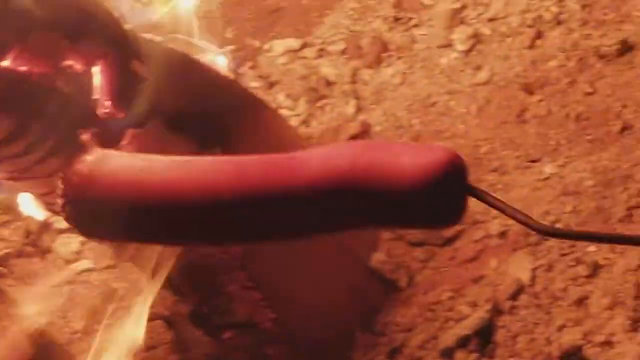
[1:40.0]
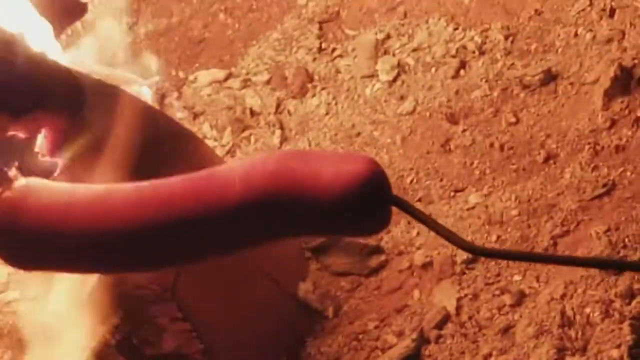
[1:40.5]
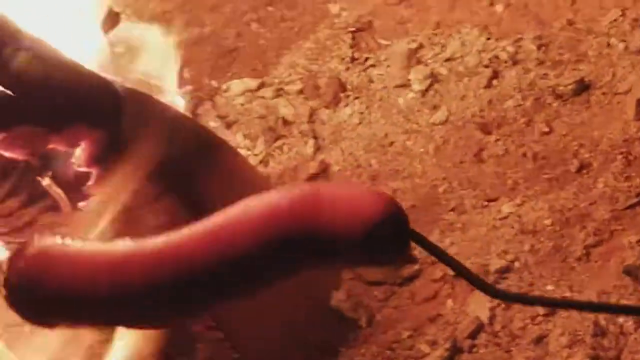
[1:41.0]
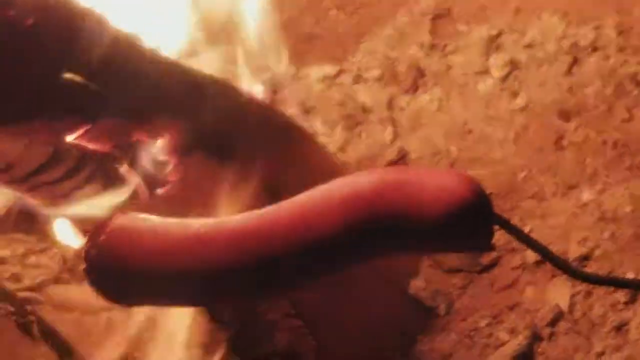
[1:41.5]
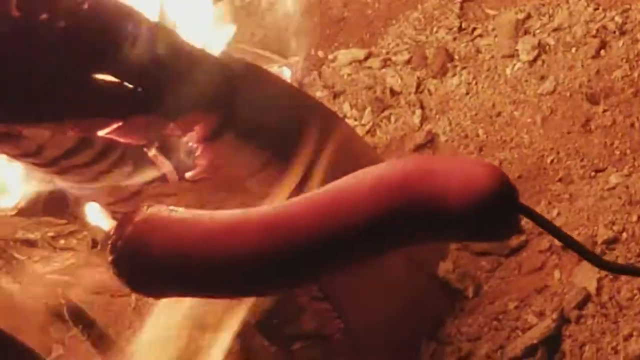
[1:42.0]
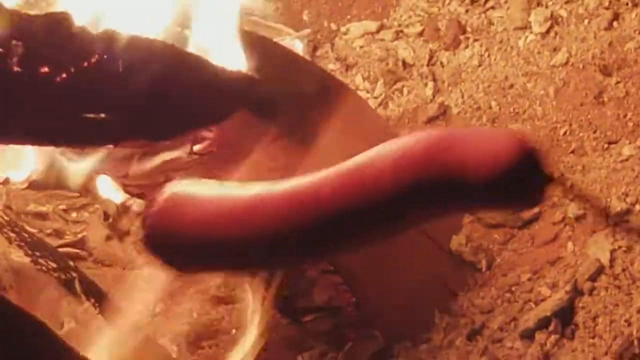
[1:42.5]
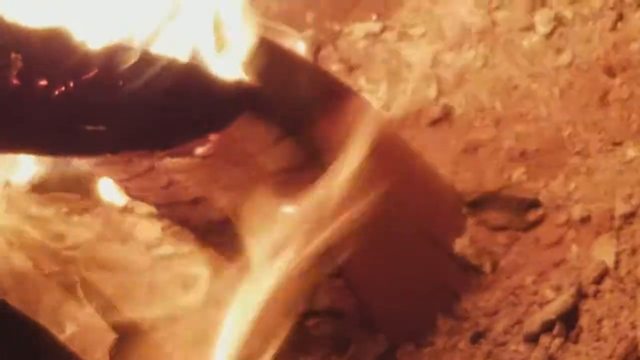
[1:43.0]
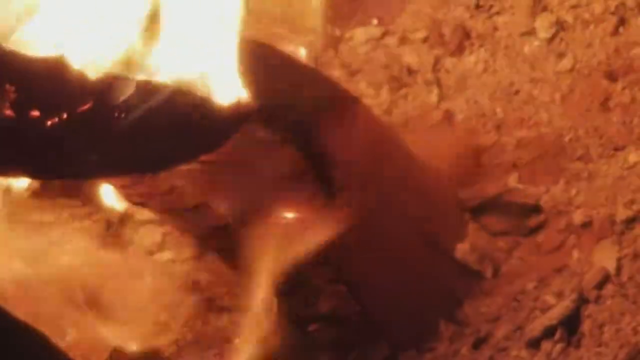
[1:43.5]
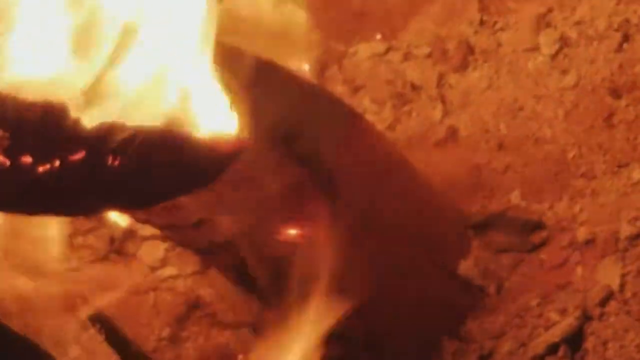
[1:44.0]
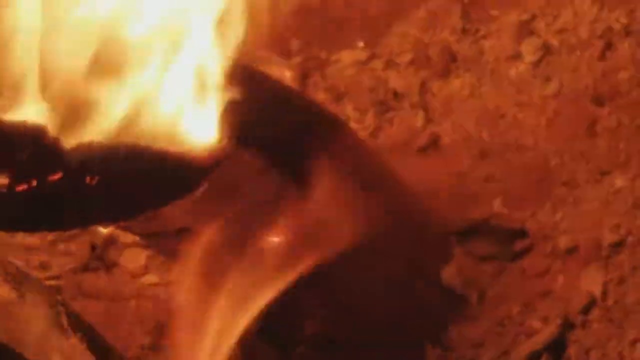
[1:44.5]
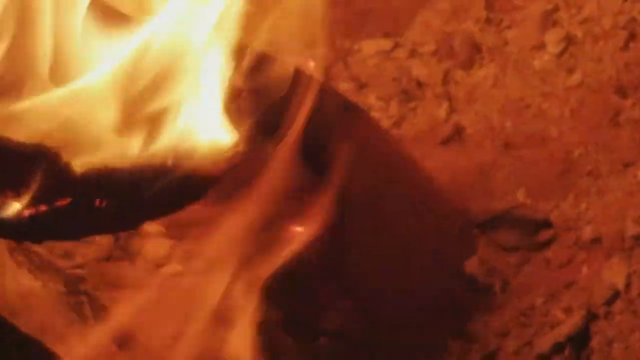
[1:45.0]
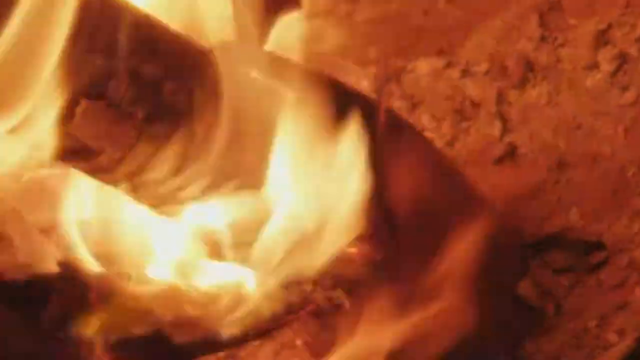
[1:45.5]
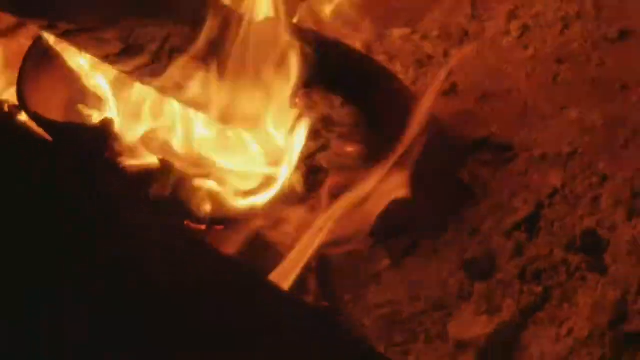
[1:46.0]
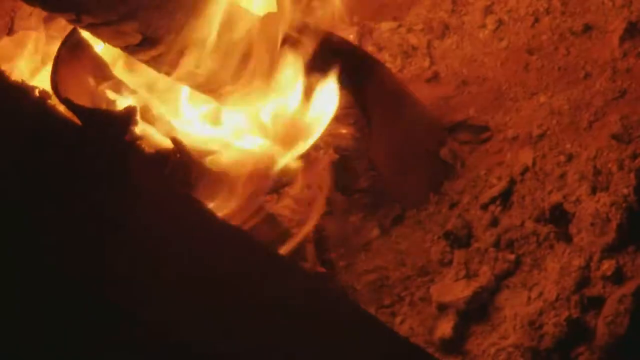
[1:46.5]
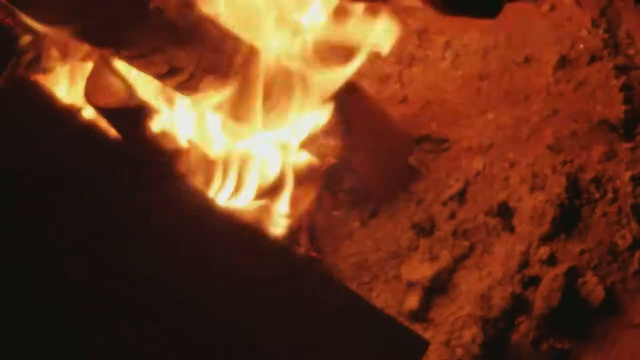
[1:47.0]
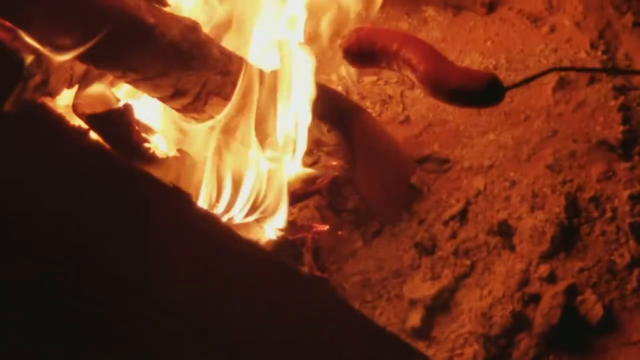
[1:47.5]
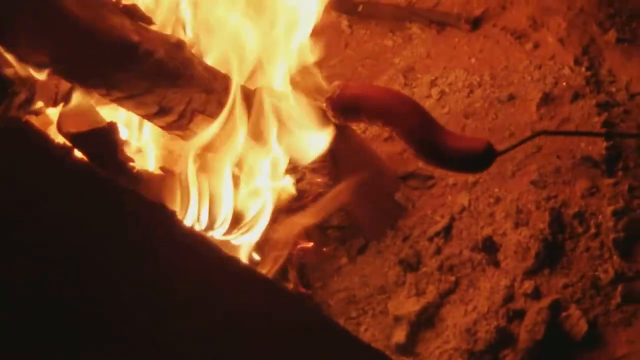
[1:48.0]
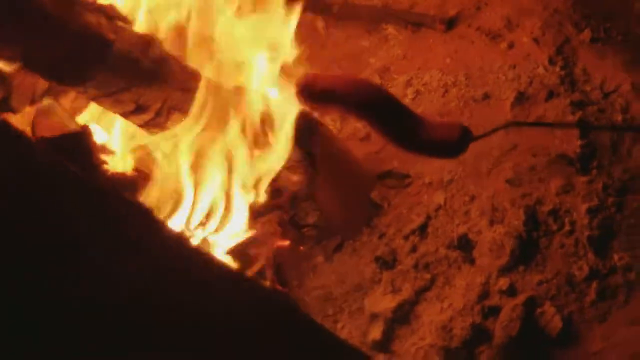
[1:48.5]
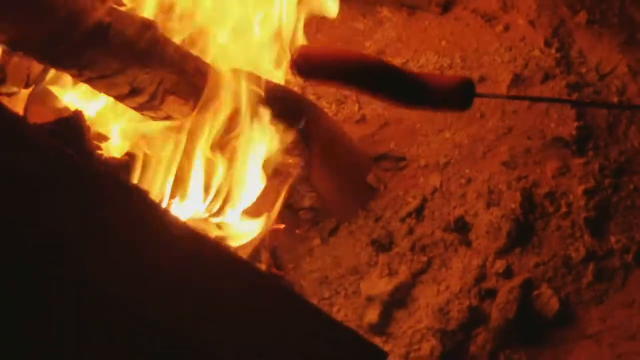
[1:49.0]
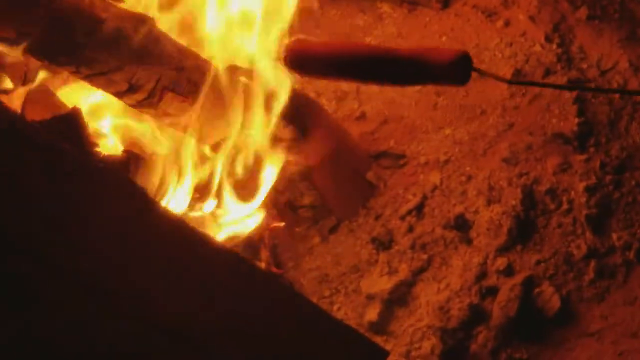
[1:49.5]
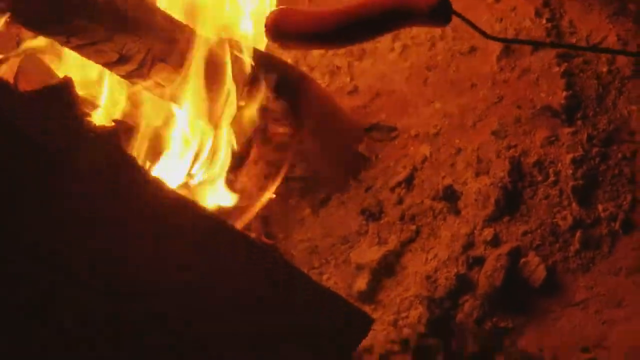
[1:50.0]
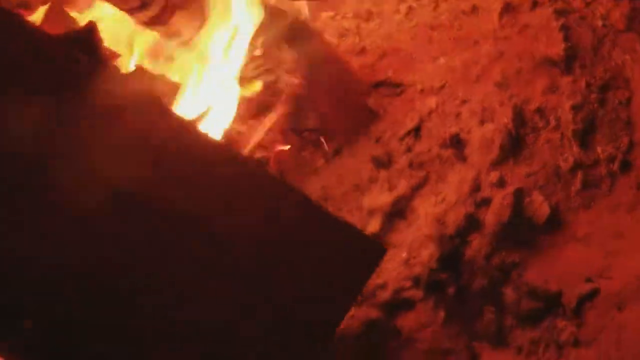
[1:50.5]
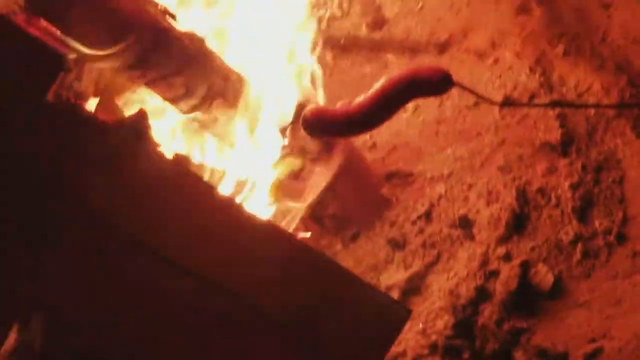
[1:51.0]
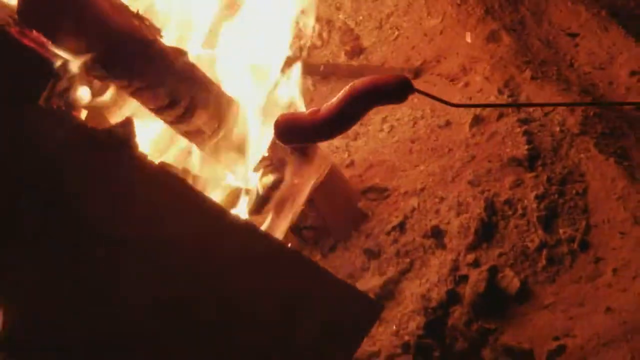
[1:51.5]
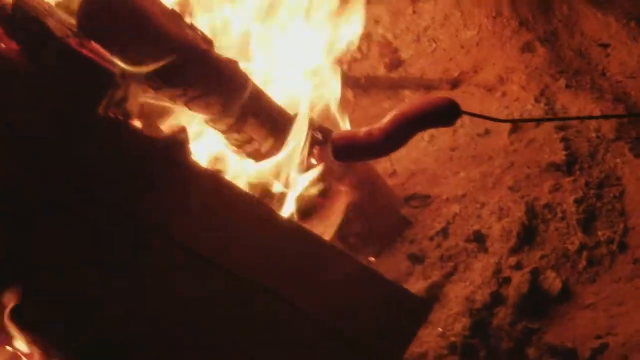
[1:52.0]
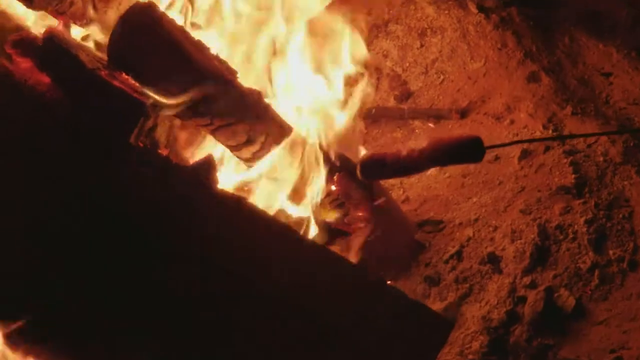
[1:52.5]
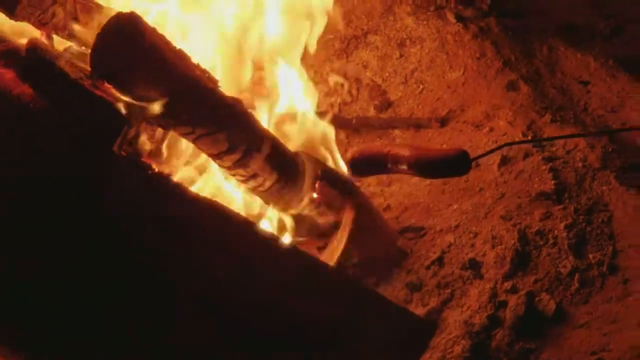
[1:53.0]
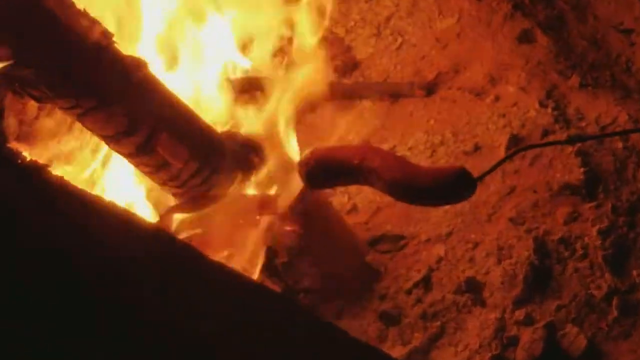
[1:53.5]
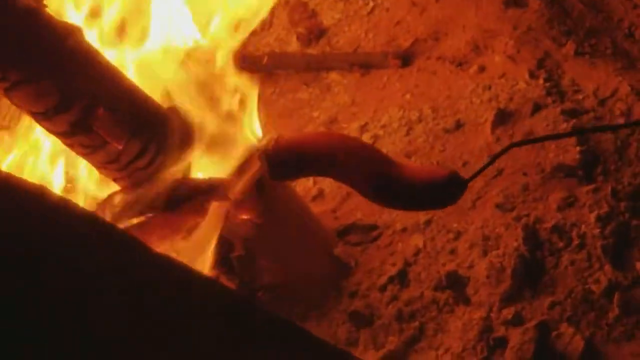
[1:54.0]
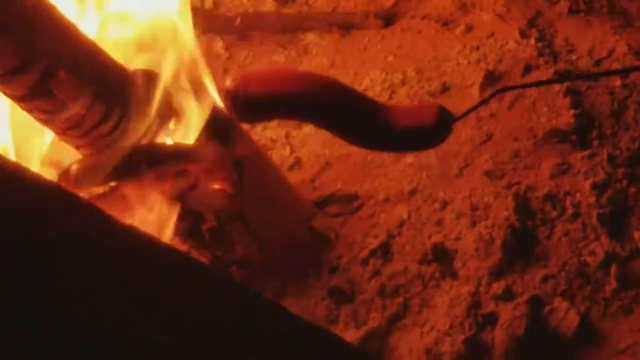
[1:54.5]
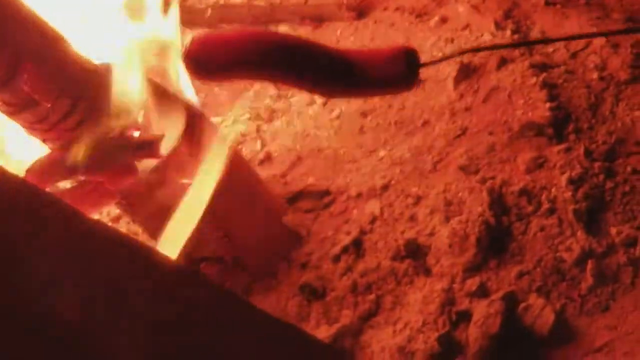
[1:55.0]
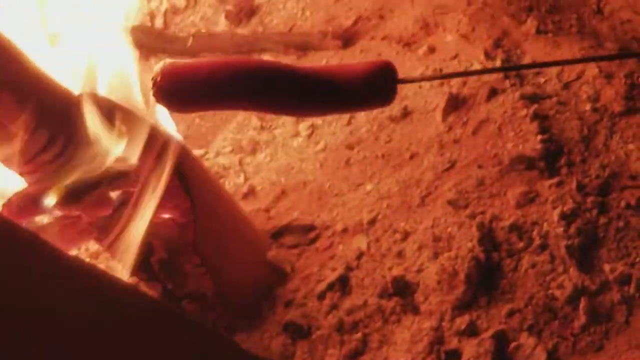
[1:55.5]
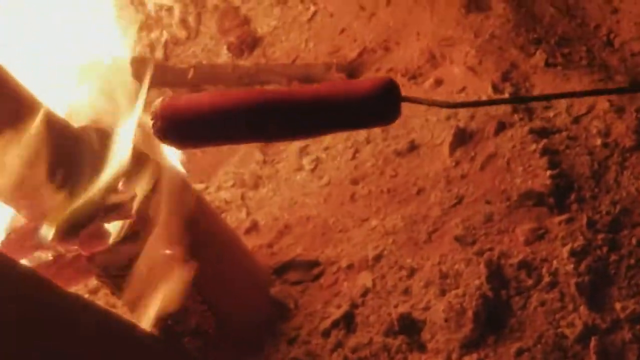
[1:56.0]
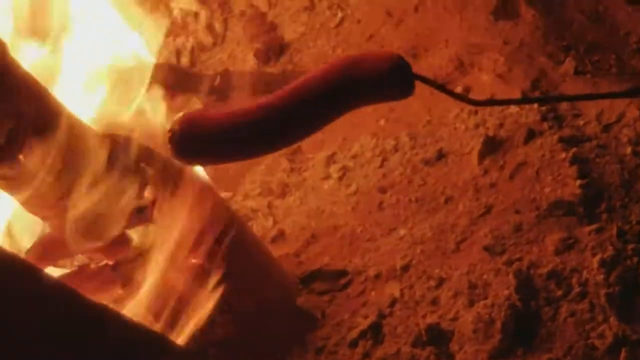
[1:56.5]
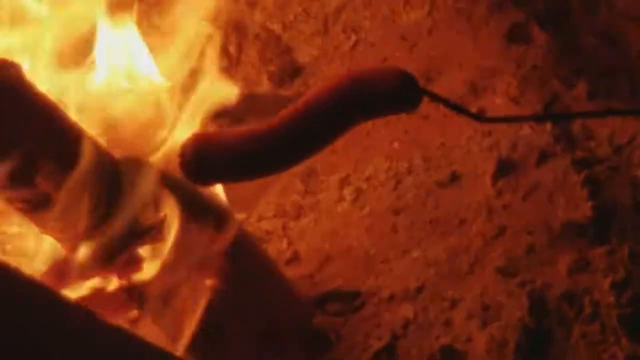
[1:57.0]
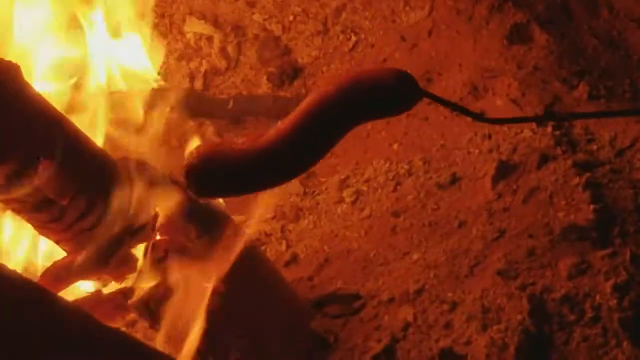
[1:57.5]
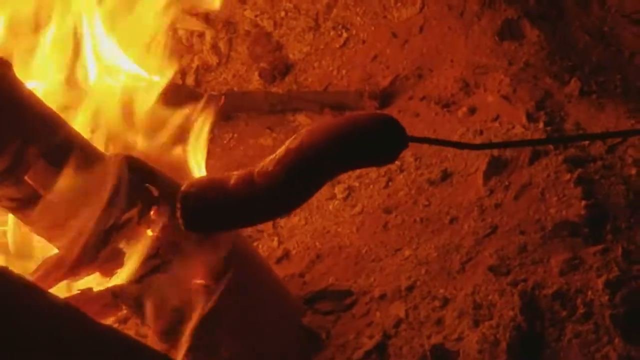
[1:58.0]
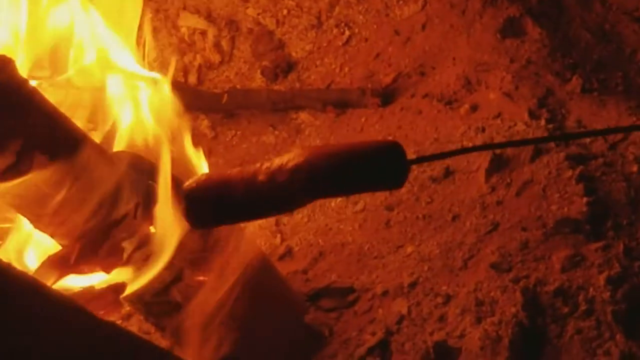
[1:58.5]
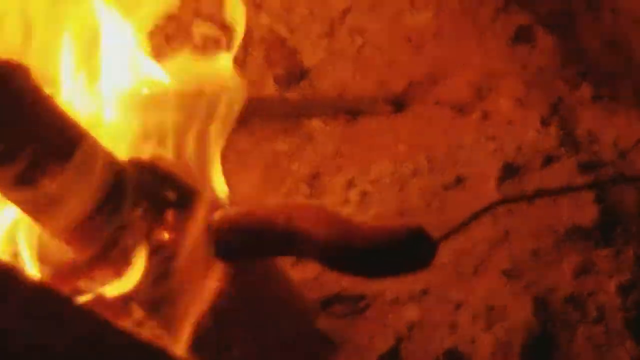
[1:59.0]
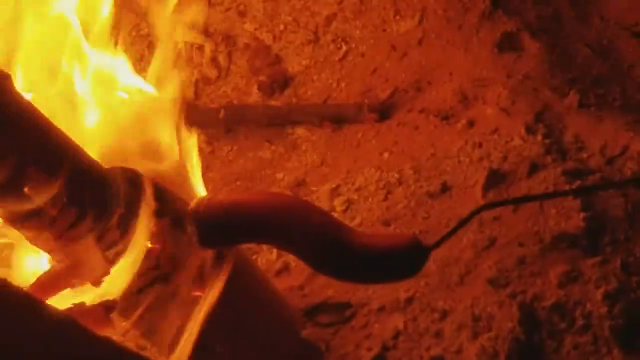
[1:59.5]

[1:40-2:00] The background does not change, and no new hand or person appears. The hand is not seen. The stick disappears and then appears again where it was, pointed at the flames, not in the middle but nearer the flames. The color of the sausage or Vienna is changing, showing a difference from the beginning.